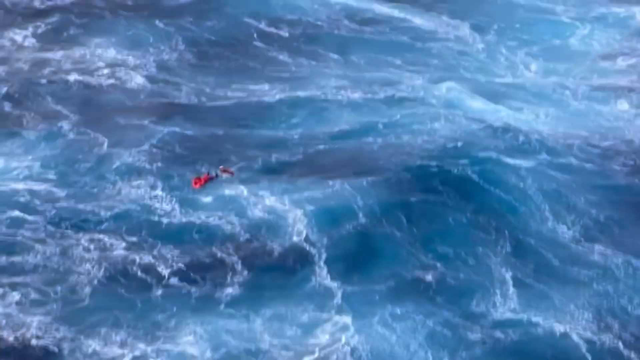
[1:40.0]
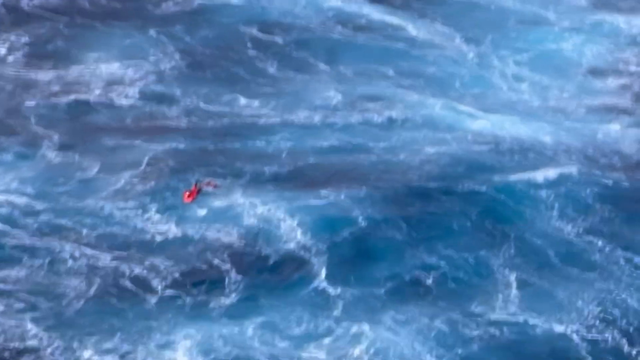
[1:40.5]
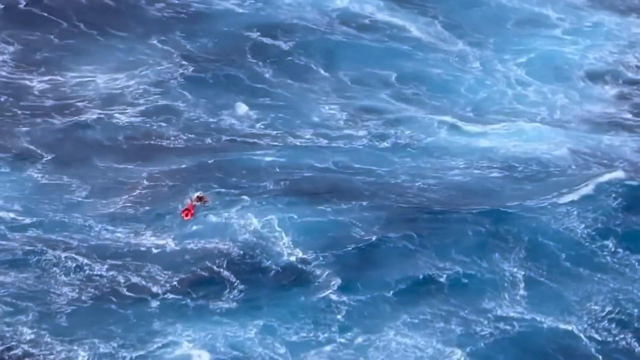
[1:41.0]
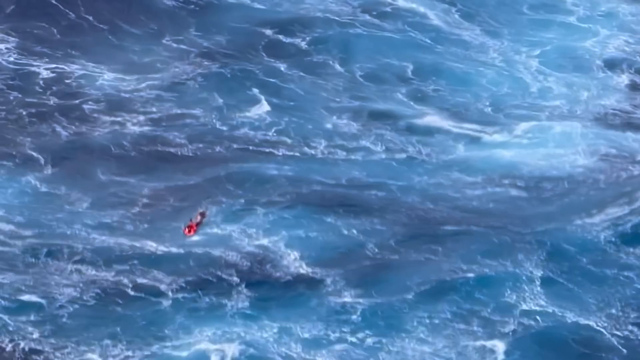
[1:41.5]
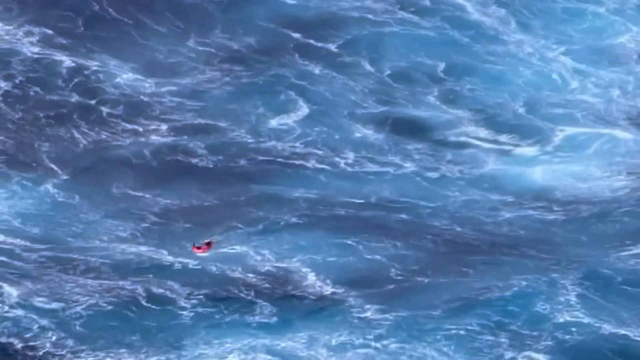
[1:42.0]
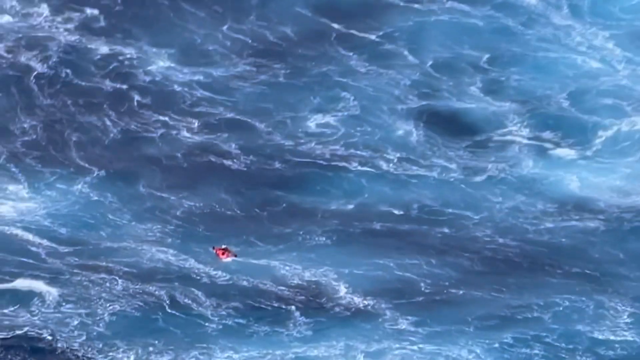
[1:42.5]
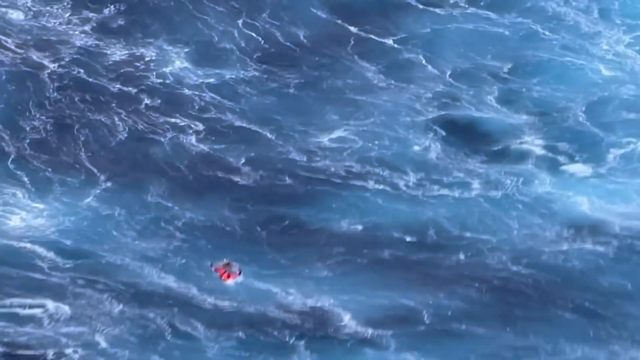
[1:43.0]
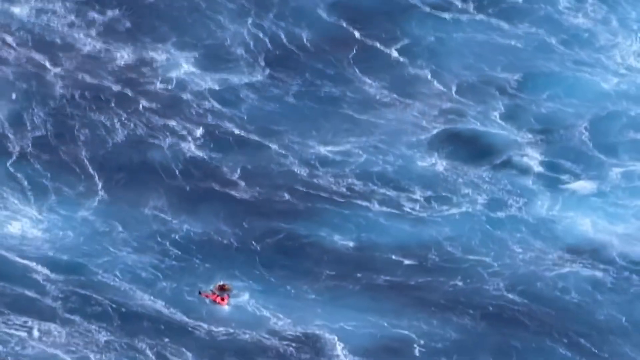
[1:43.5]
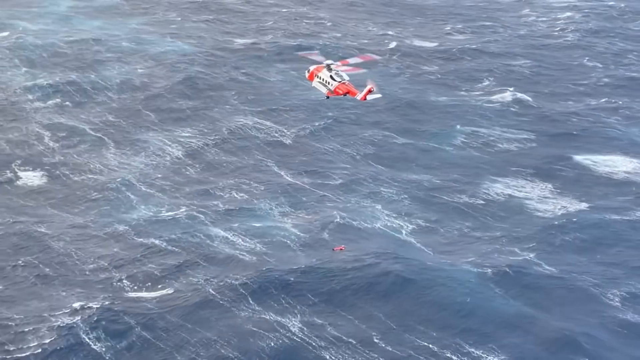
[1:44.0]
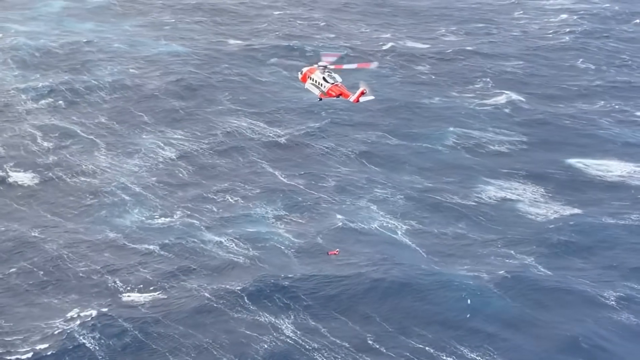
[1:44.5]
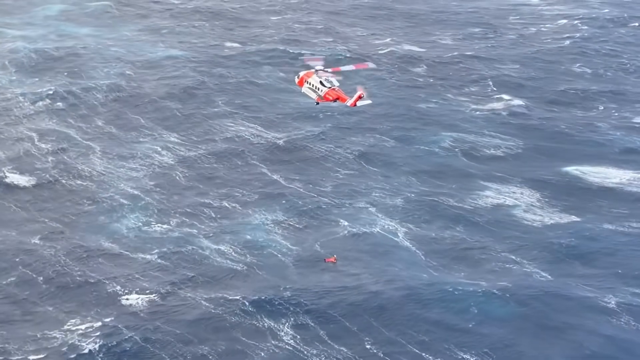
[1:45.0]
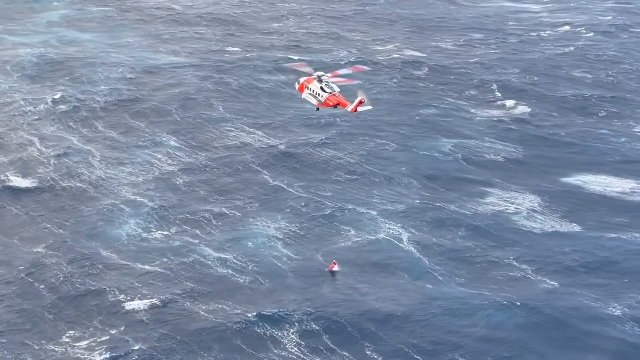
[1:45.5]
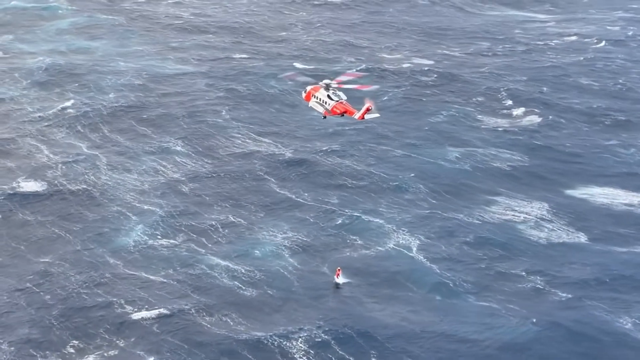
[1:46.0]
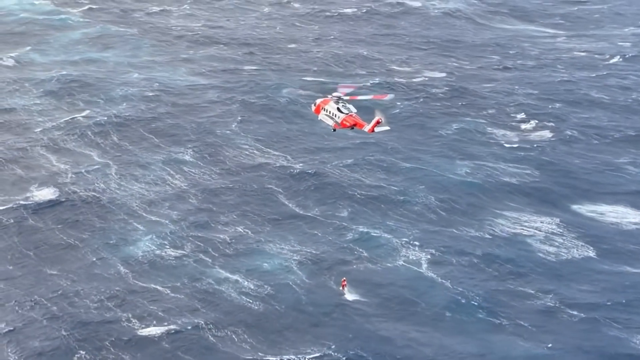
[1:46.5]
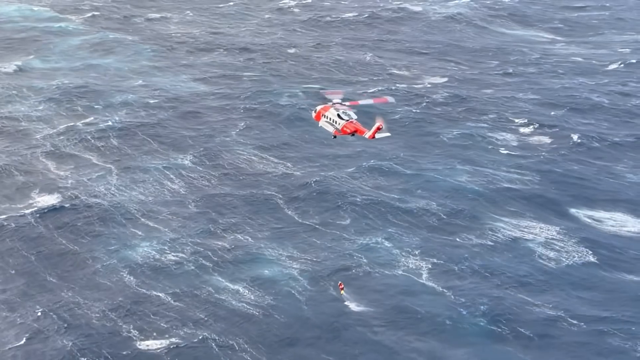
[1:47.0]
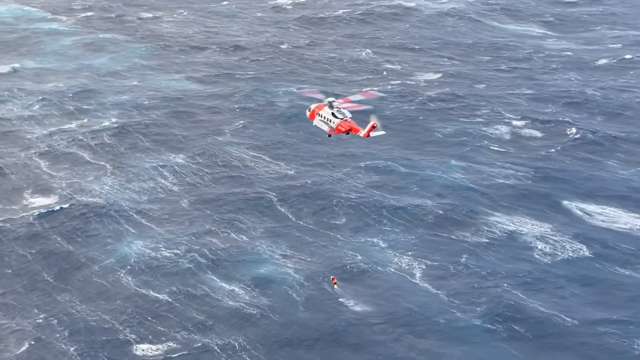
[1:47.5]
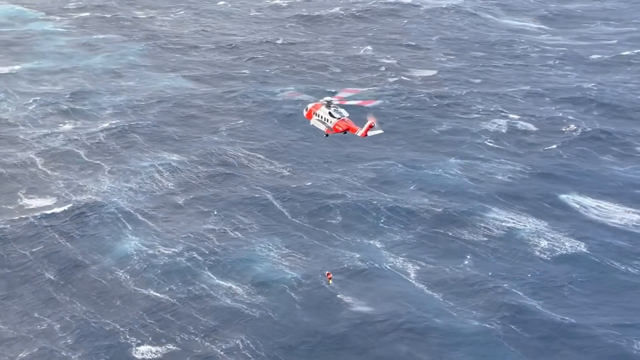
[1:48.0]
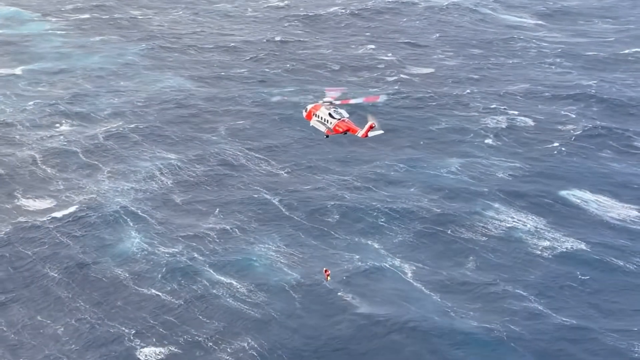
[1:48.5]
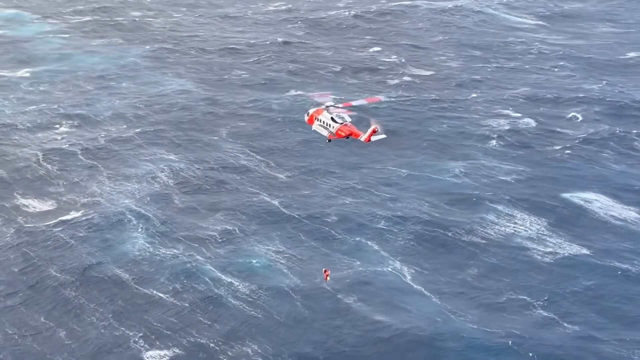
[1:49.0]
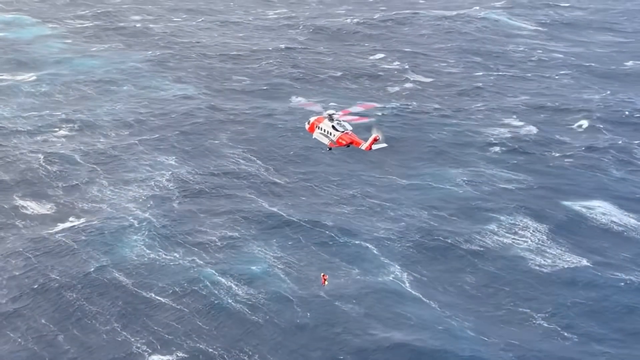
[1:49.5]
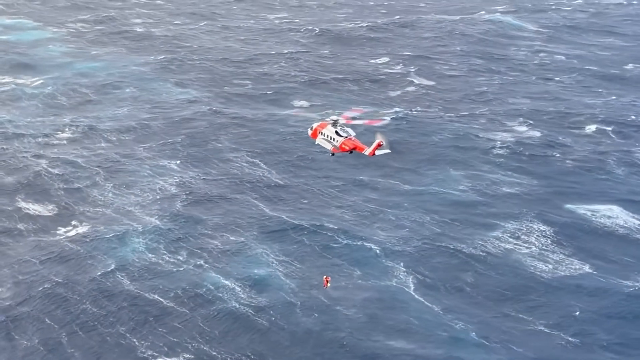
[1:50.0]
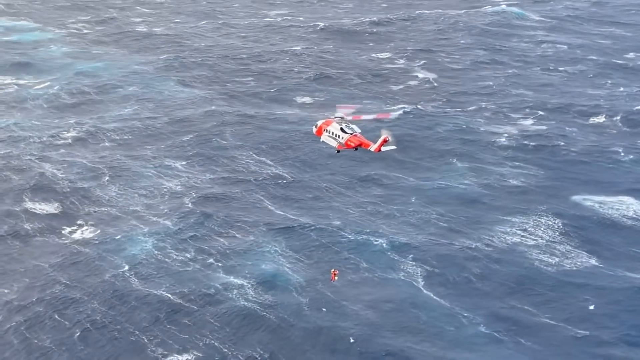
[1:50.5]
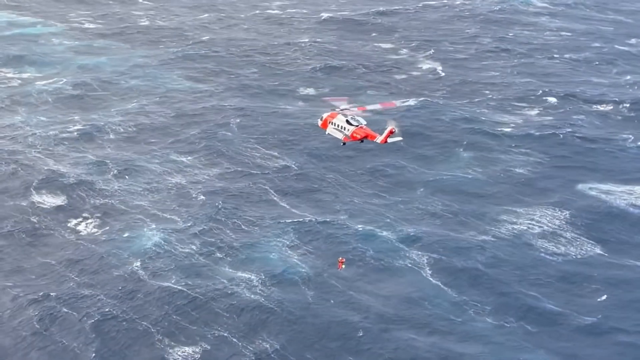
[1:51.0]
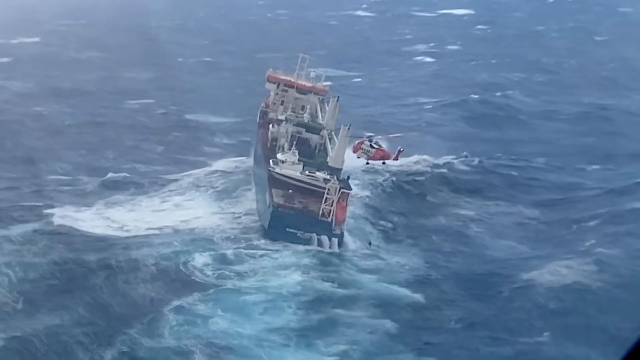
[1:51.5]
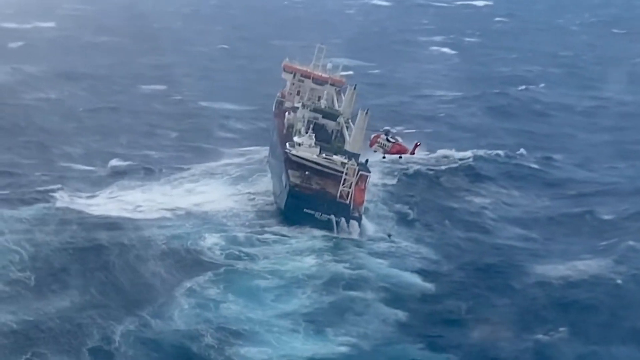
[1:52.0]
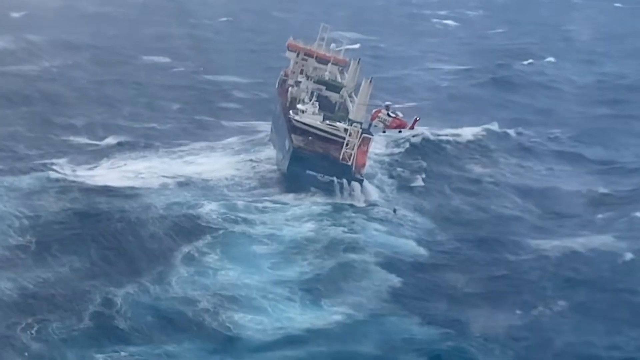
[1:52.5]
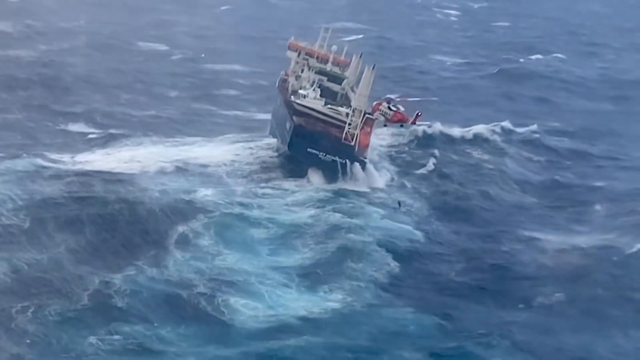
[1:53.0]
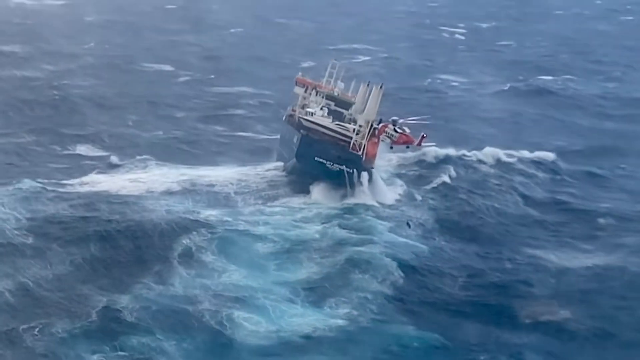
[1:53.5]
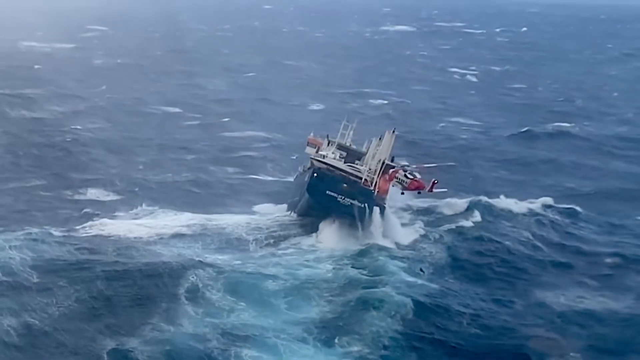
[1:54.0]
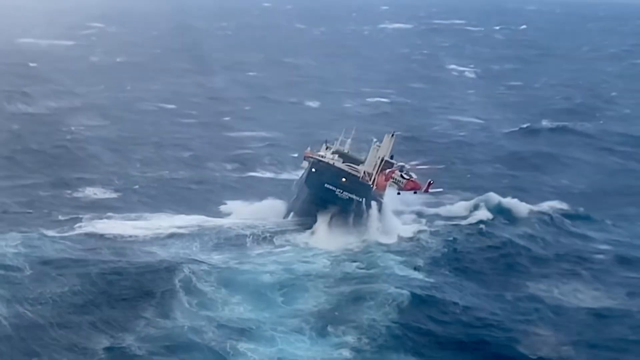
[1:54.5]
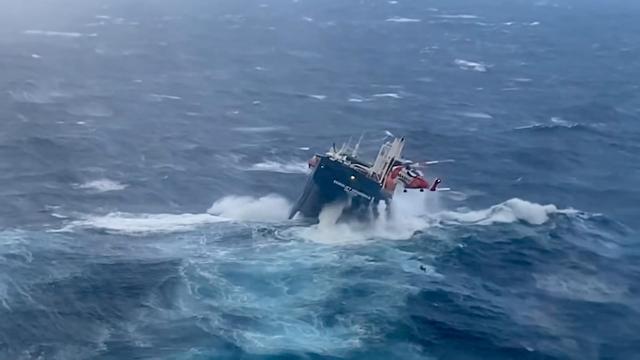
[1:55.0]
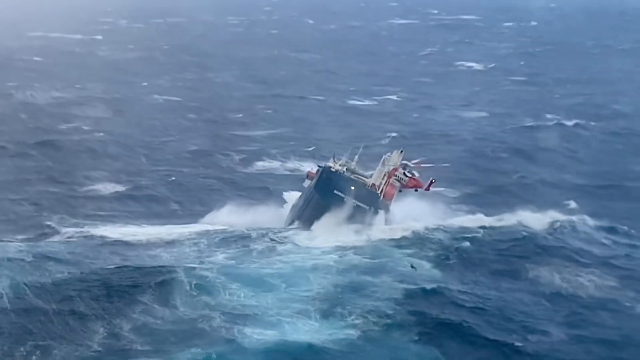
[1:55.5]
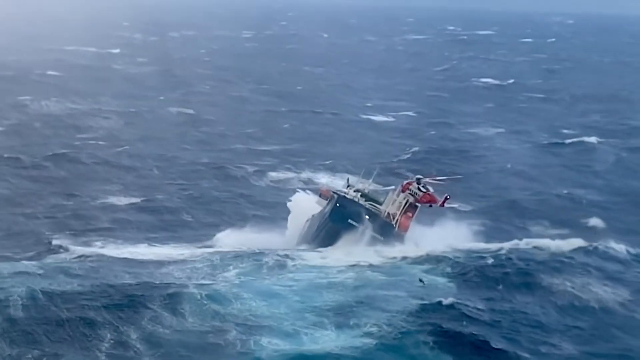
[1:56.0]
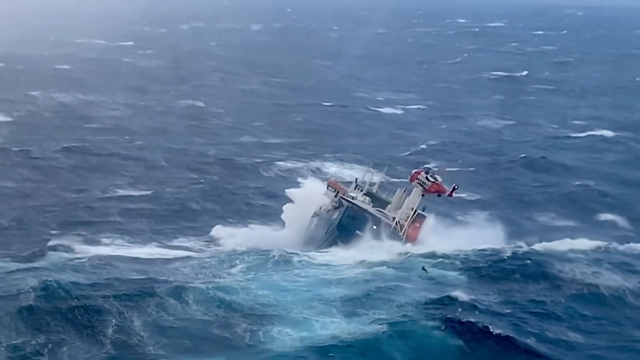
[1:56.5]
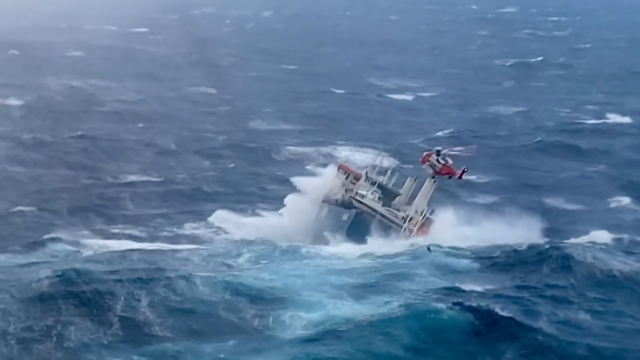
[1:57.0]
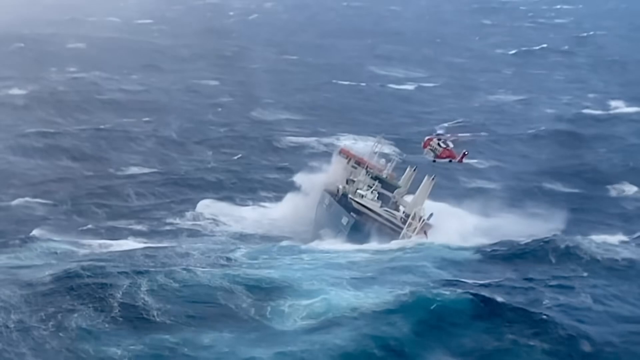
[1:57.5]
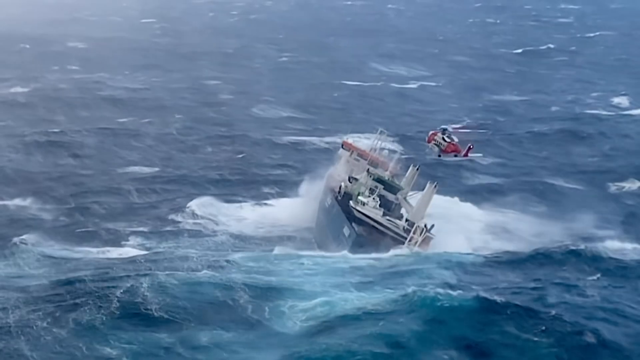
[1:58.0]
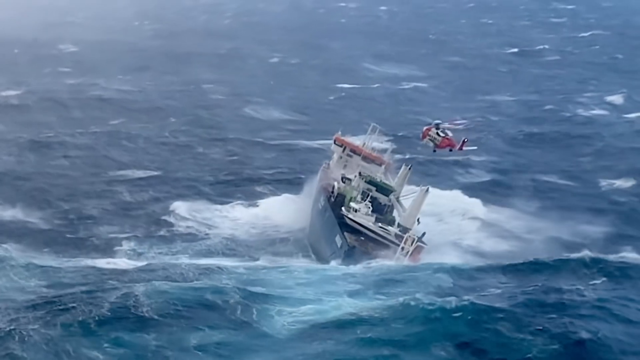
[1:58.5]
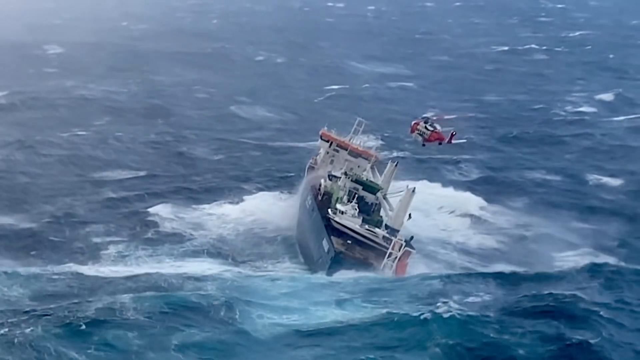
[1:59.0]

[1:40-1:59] The person in the life jacket is picked up by the man from the helicopter, who is still attached to the helicopter by the rope. After he grabs the person, the helicopter gradually raises them and both leave the sea surface. The helicopter then moves near the vessel, and in the background the vessel faces very harsh waves and tilts pretty aggressively while the two people are raised onto the helicopter.